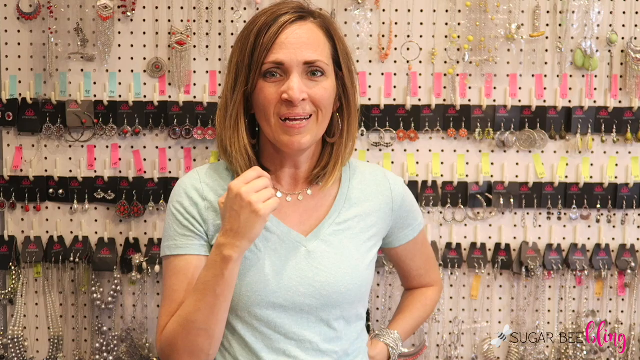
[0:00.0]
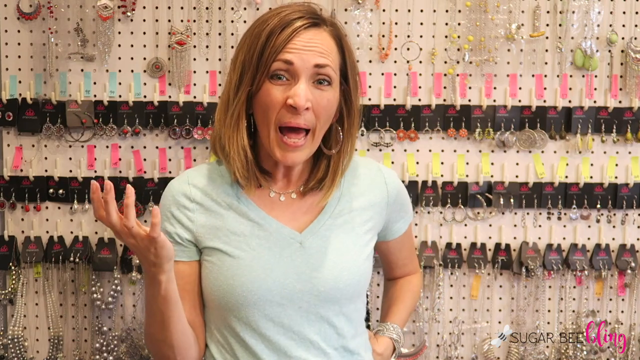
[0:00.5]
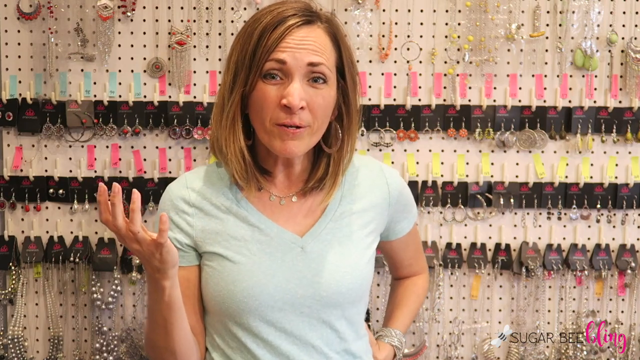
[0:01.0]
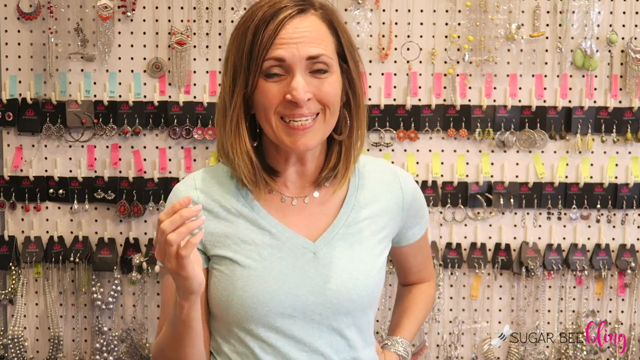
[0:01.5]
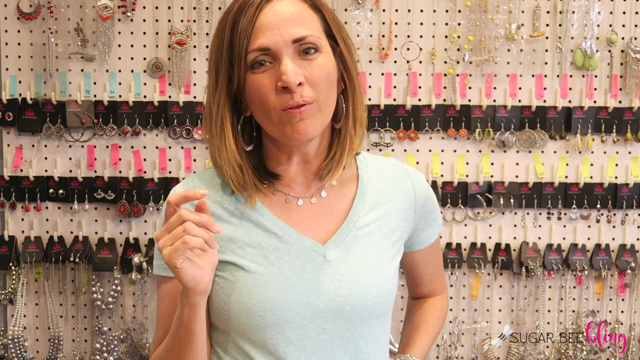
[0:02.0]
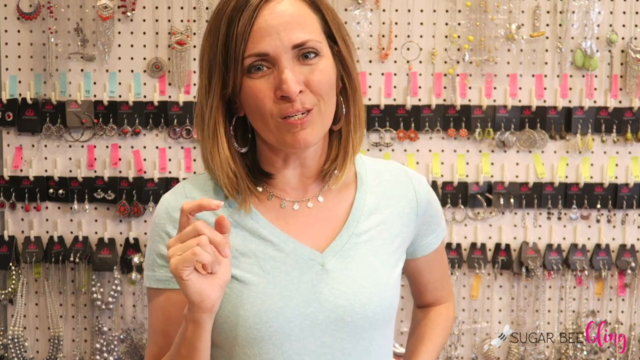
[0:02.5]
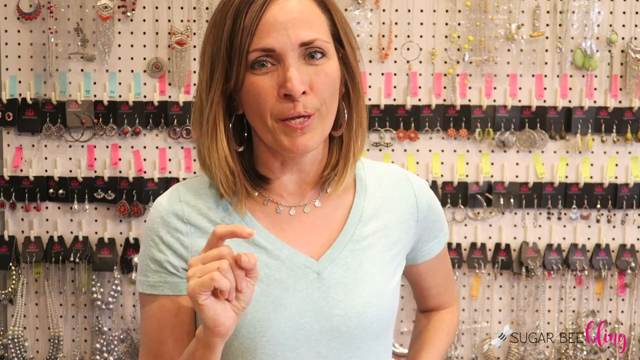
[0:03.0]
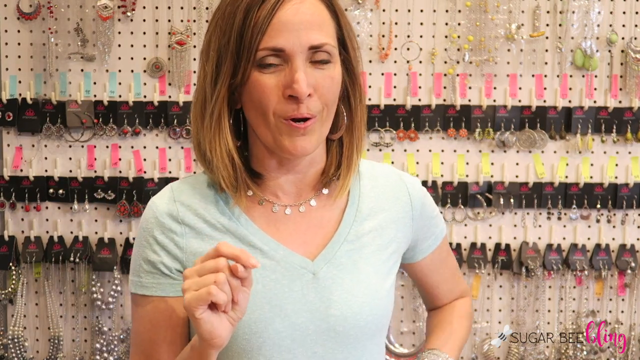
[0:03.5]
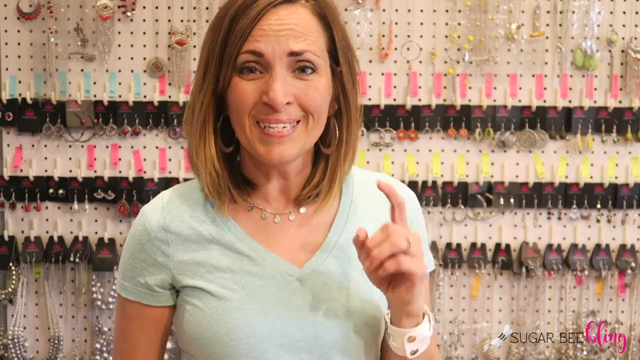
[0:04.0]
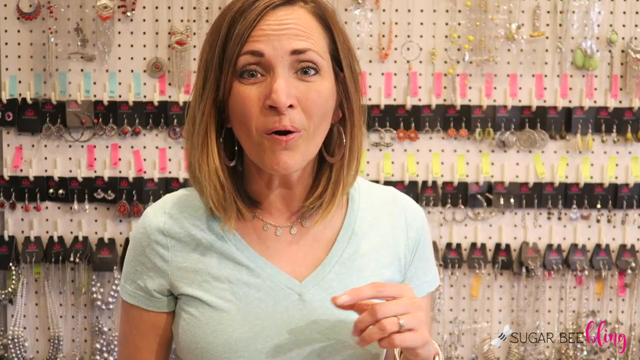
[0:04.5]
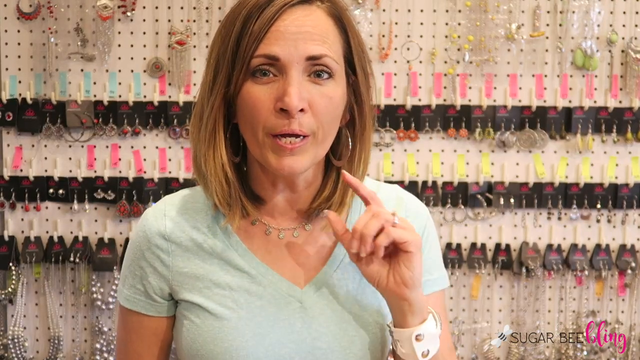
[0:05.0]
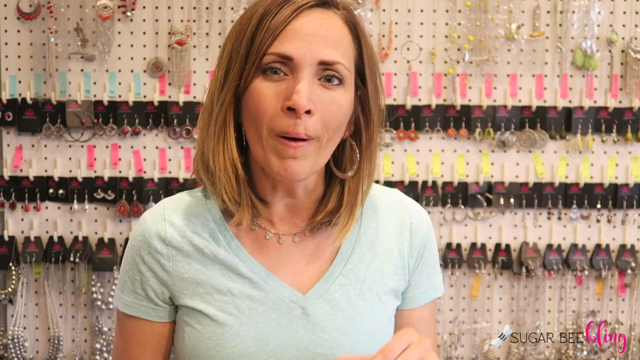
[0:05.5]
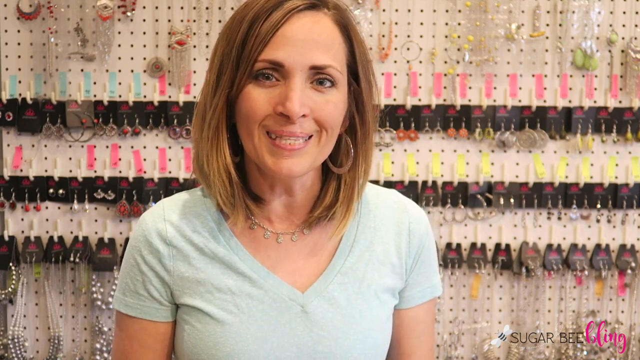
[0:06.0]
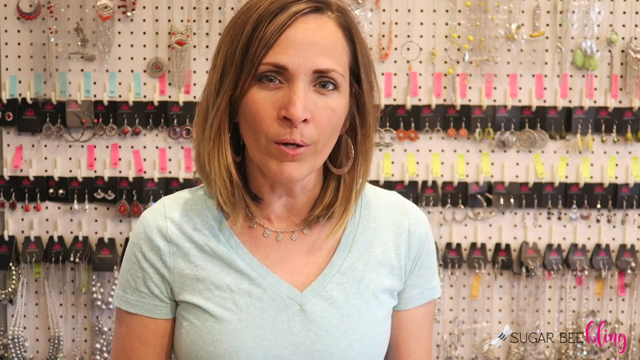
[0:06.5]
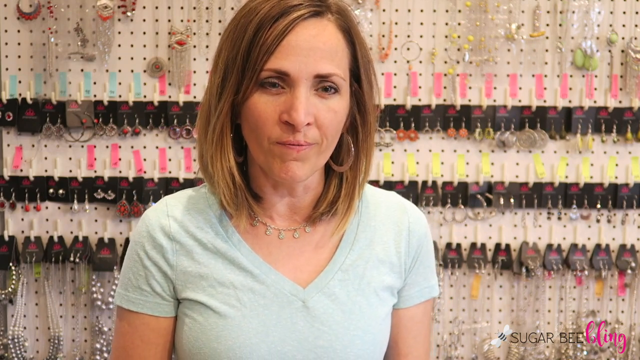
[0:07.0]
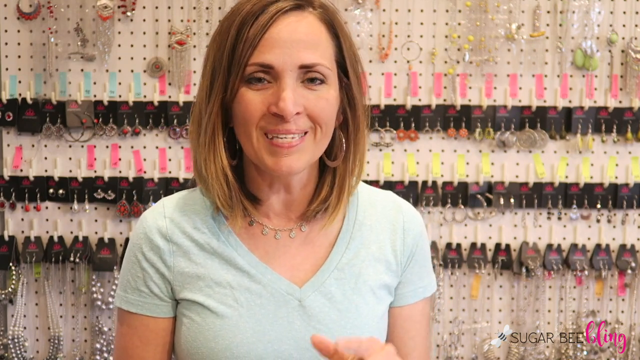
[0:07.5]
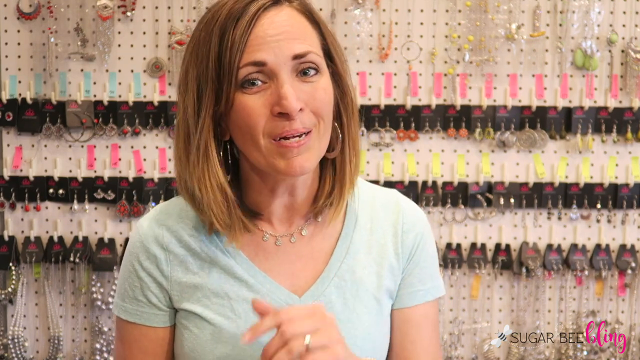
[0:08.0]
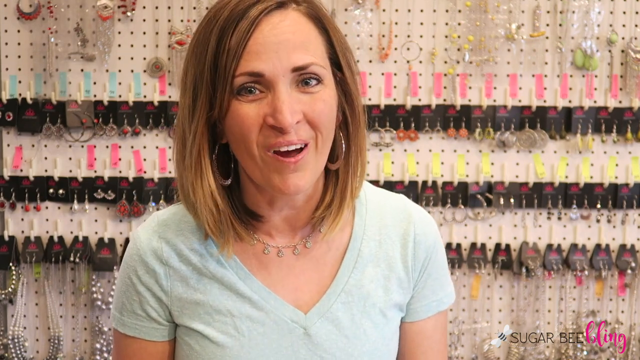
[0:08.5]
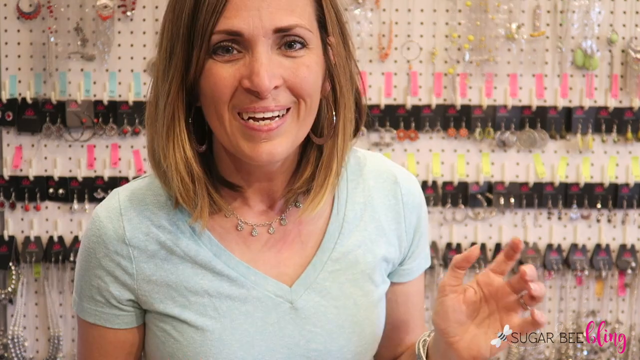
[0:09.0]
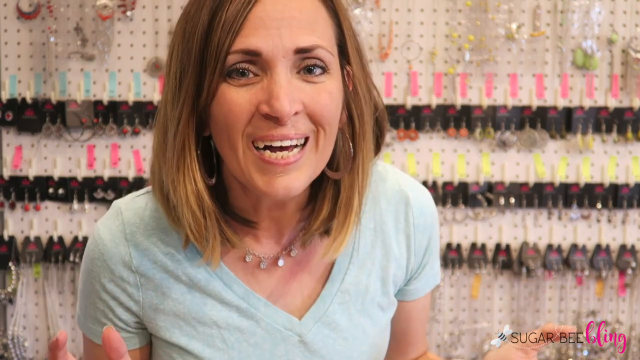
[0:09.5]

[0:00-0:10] A woman with short blonde hair, delicate makeup and blue eyes wears circle-shaped earrings, a necklace and a blue T-shirt. She stands in front of the camera, and behind her many pieces of jewelry hang on the wall, including earrings and other accessories for outfits. The woman talks and gestures with her hands about this type of fashion.